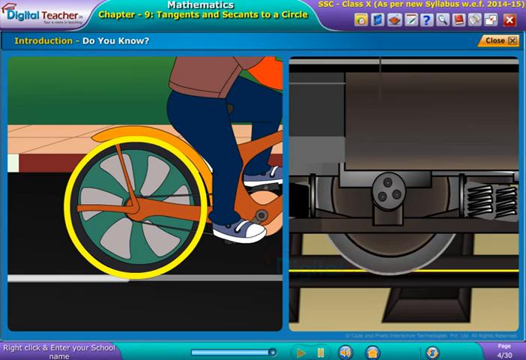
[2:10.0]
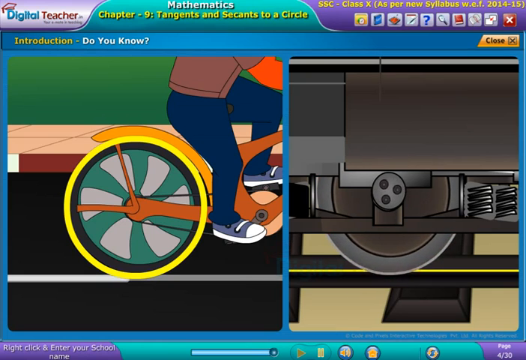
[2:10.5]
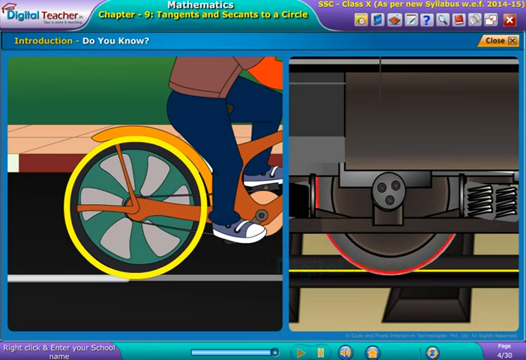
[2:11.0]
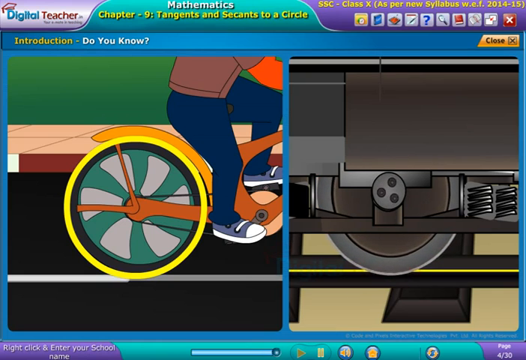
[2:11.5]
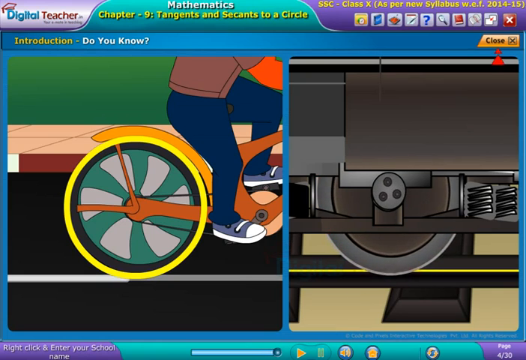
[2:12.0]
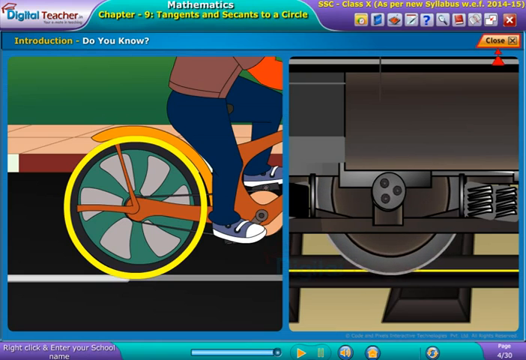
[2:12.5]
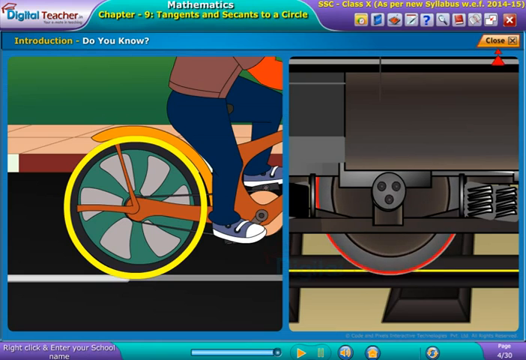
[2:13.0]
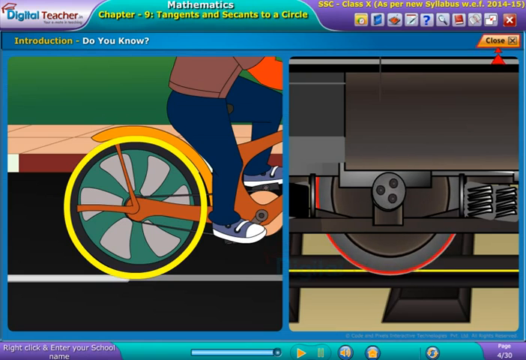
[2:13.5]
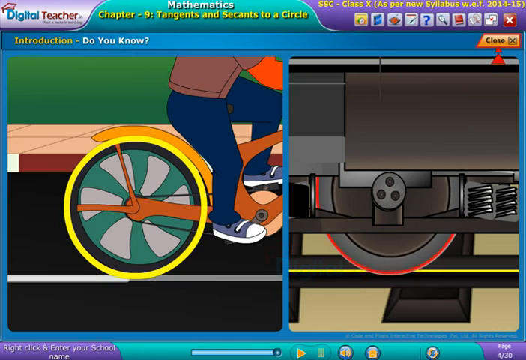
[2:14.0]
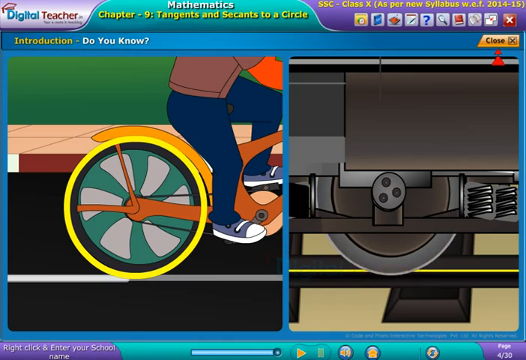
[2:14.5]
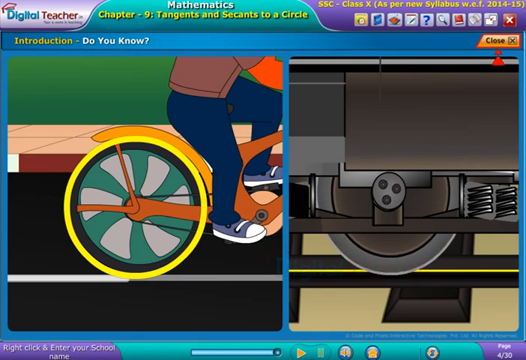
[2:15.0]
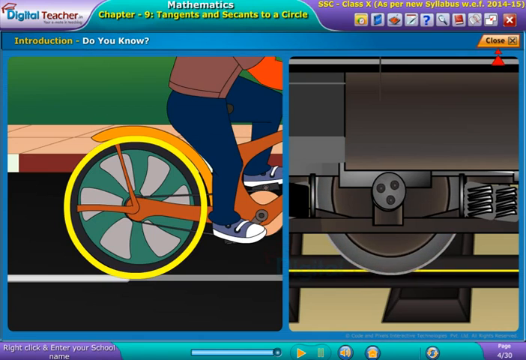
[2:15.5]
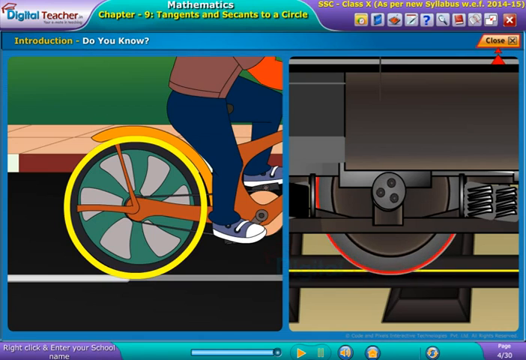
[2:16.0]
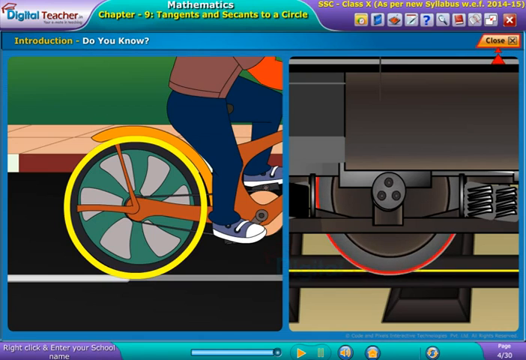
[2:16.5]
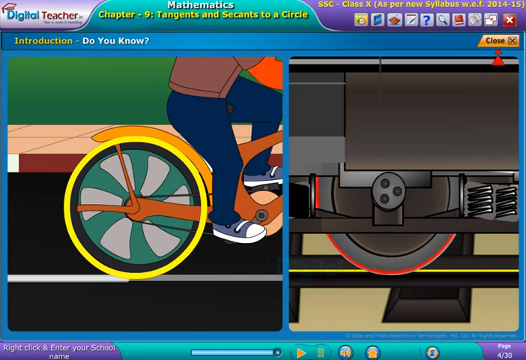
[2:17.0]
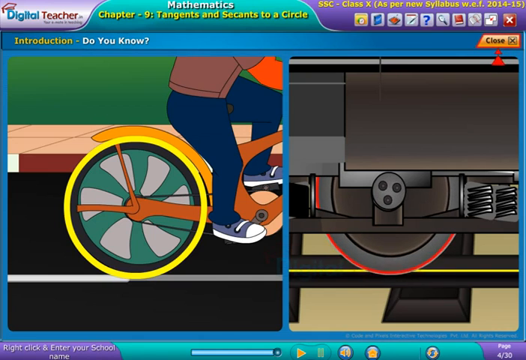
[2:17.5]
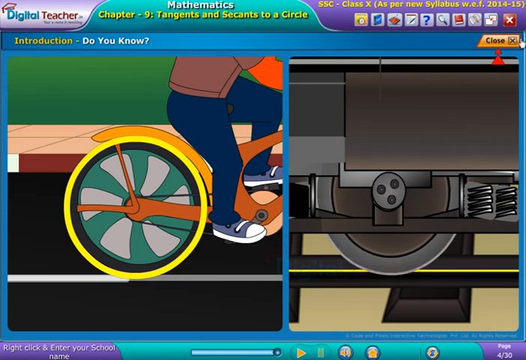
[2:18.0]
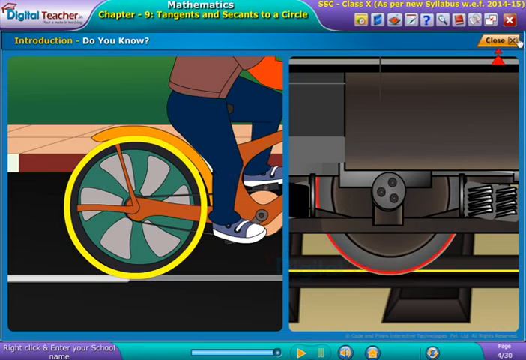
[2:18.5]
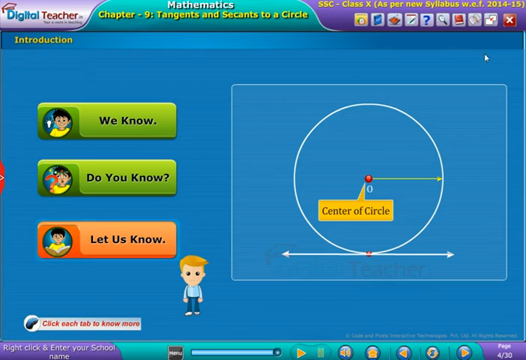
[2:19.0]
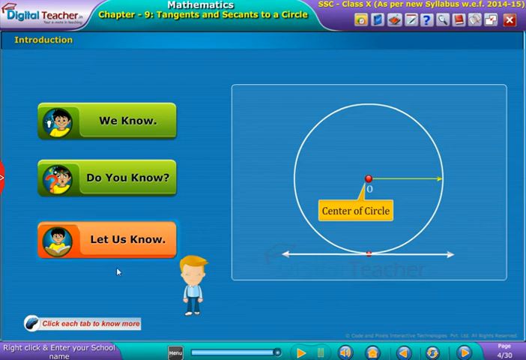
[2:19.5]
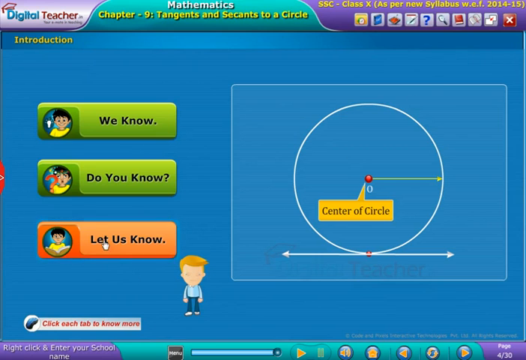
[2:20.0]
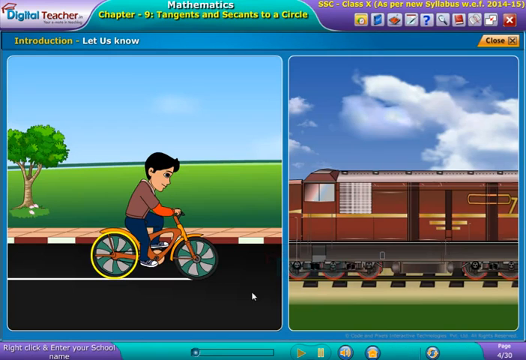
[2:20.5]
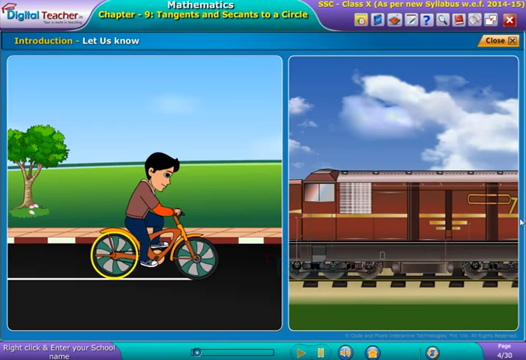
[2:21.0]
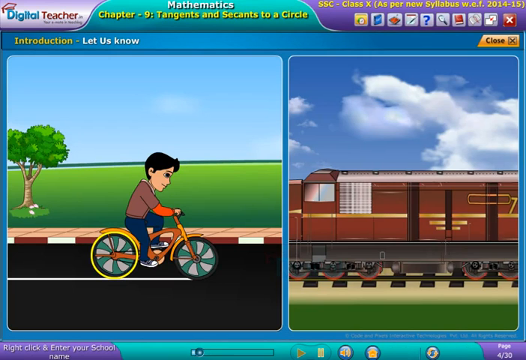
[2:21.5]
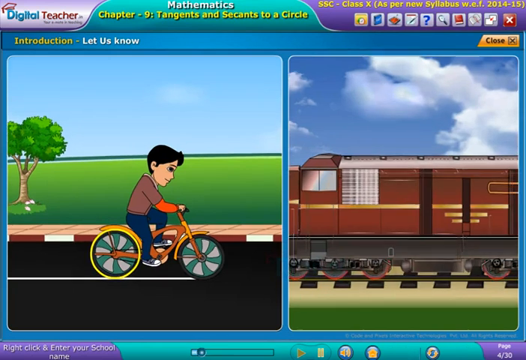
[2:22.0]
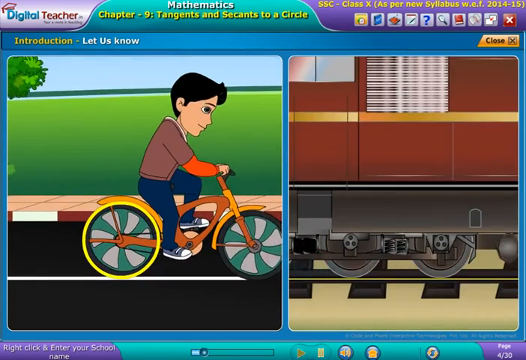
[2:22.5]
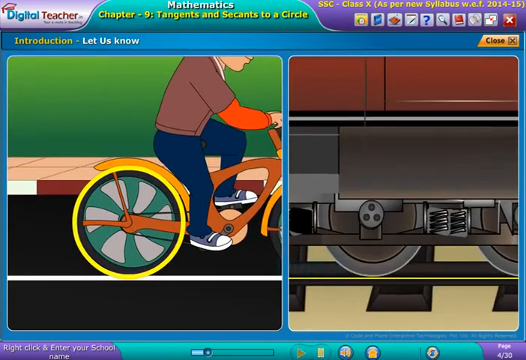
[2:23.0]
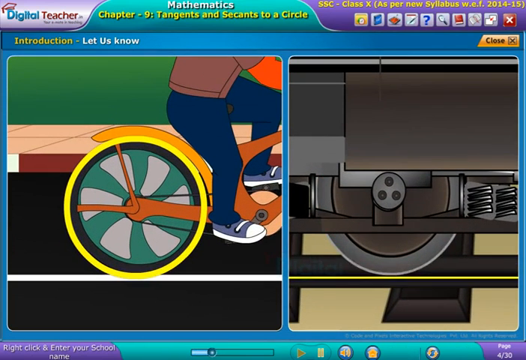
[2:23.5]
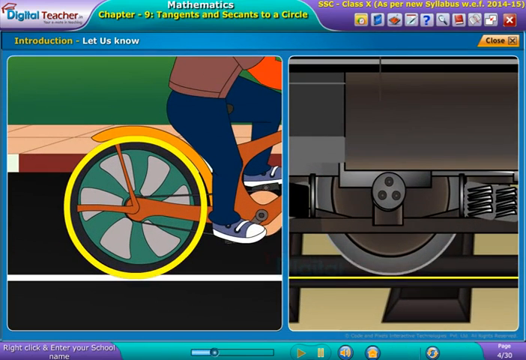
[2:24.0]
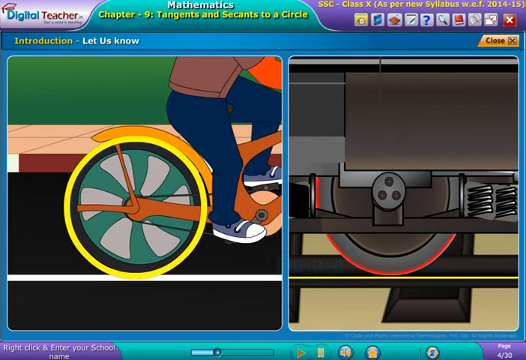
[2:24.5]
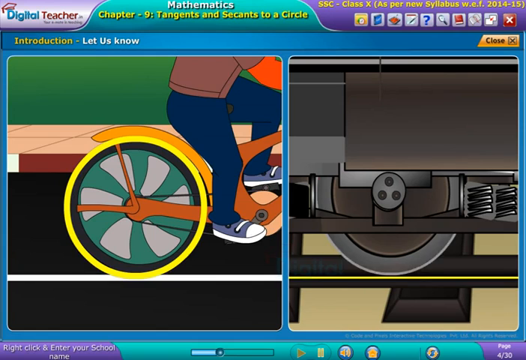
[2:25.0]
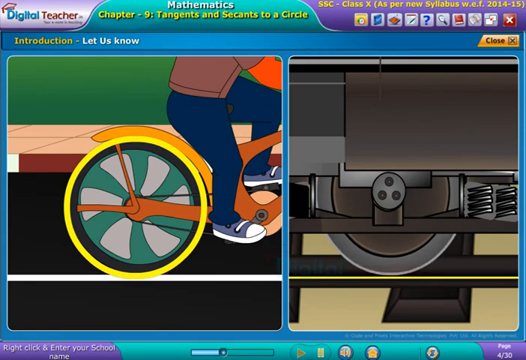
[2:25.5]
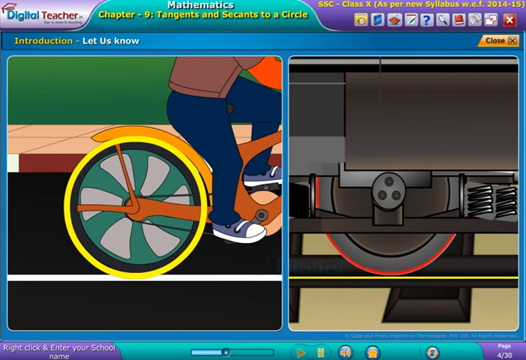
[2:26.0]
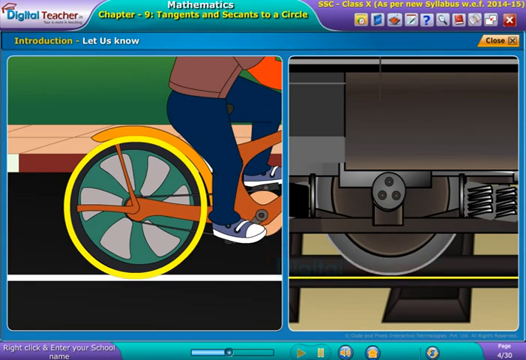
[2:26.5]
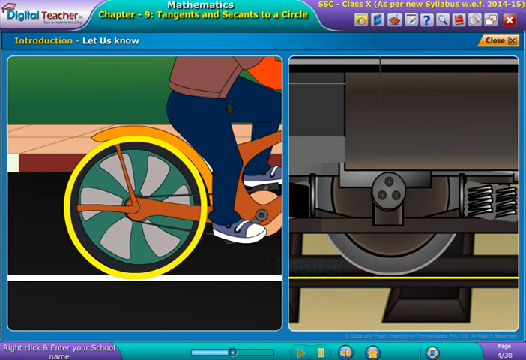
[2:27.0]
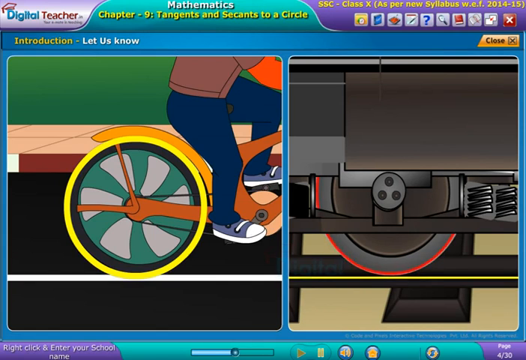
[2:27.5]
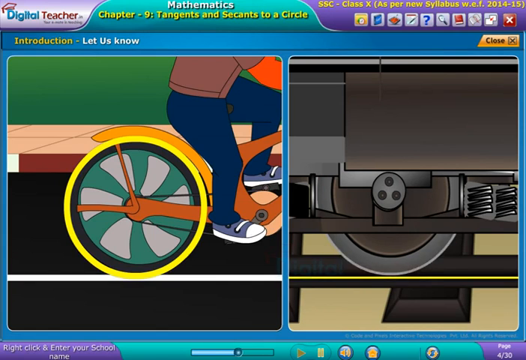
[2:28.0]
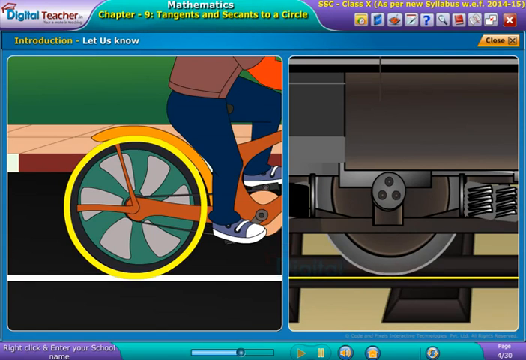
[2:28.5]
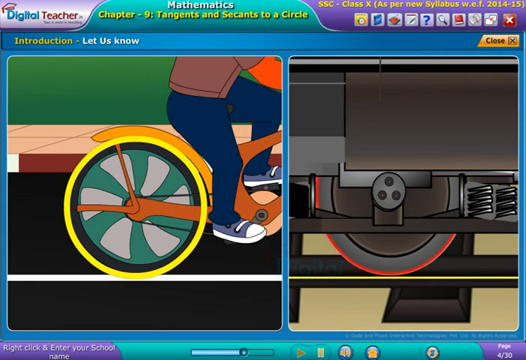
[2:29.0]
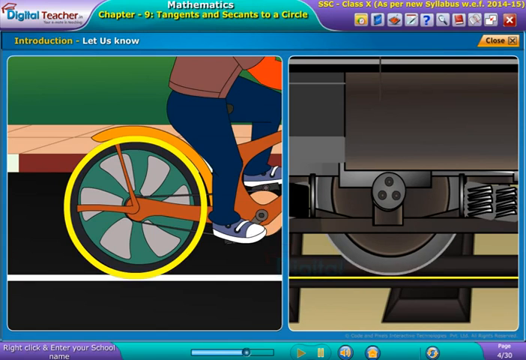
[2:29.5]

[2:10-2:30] The very zoomed-in bike and train wheels continue to be shown; the bike wheel is highlighted in yellow and the train wheel in red. The home screen then appears for a split second, and the last option, "let us know", apparently the third step, is clicked. Another close-up of the bike wheels and the train wheel appears, apparently reviewing how the wheels operate as covered in the lesson.